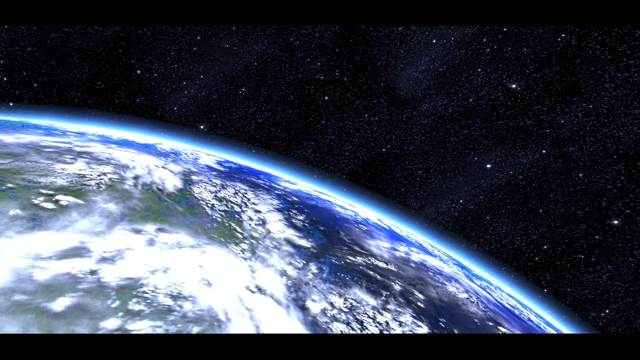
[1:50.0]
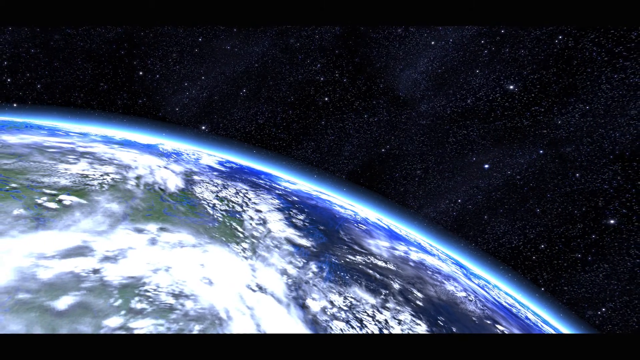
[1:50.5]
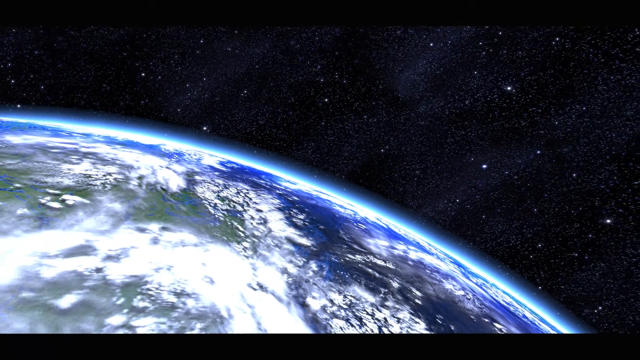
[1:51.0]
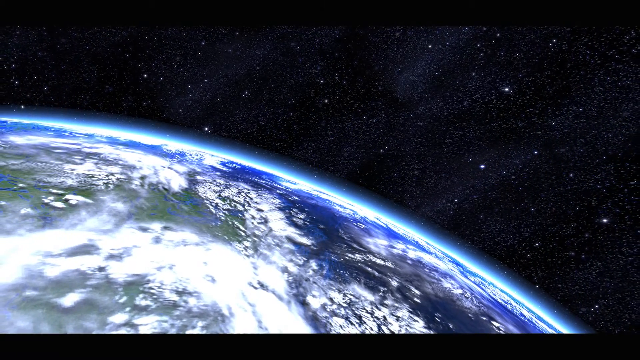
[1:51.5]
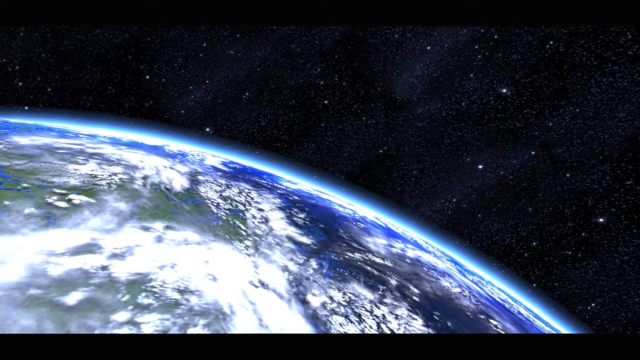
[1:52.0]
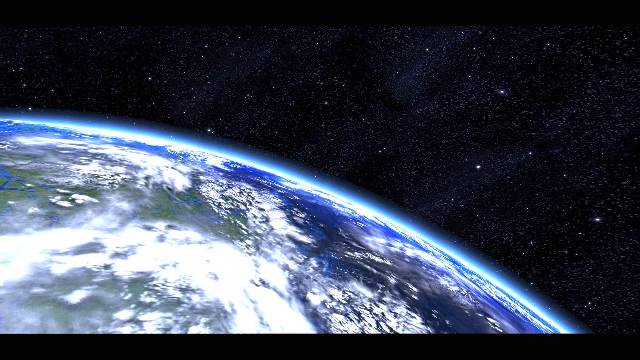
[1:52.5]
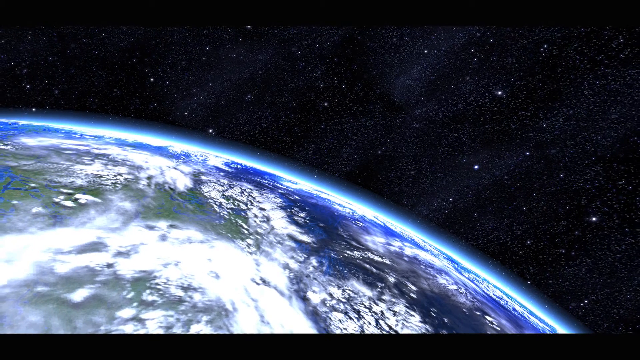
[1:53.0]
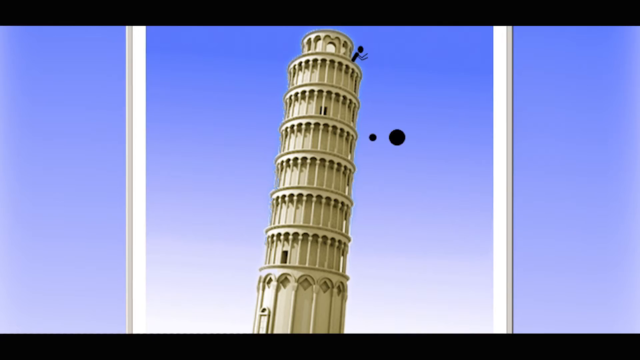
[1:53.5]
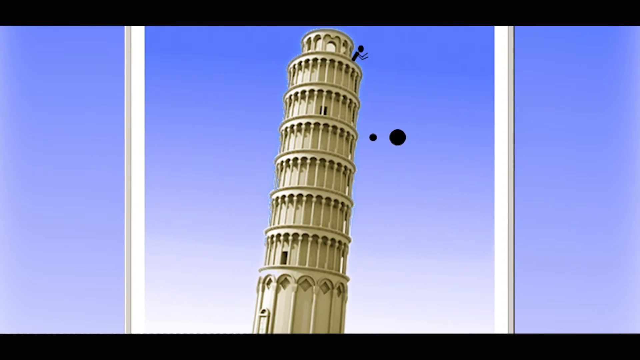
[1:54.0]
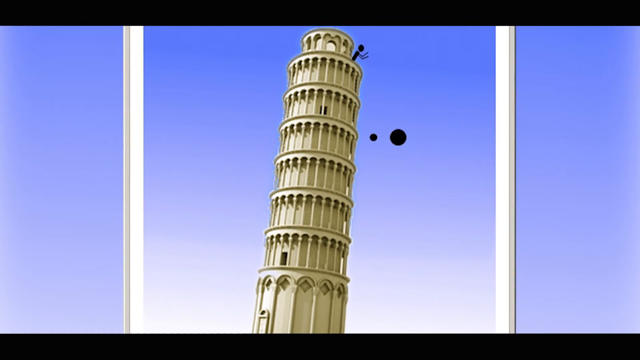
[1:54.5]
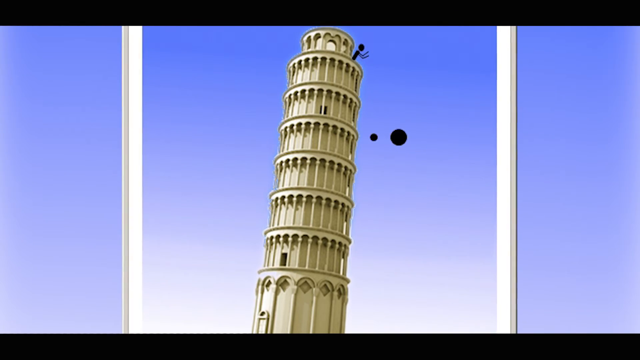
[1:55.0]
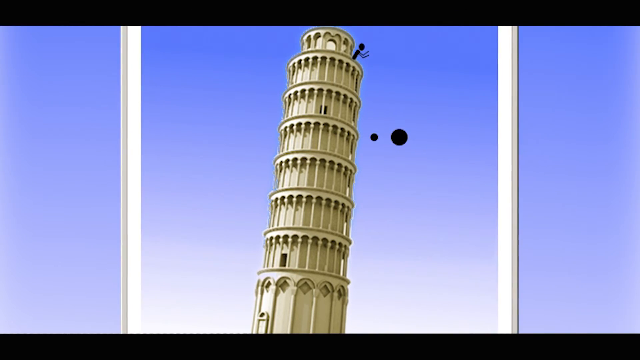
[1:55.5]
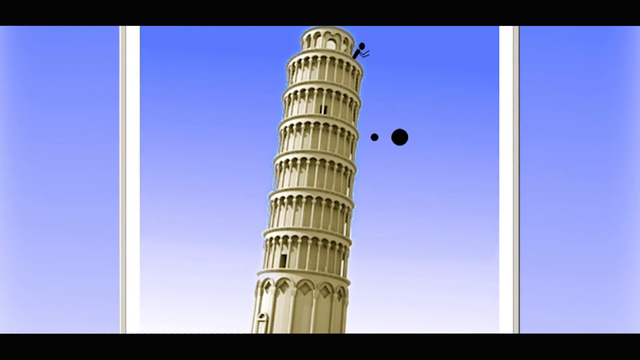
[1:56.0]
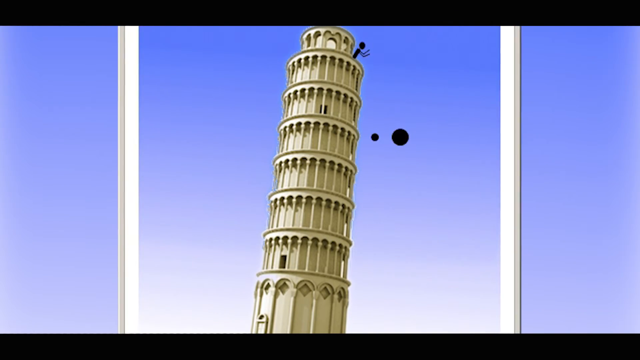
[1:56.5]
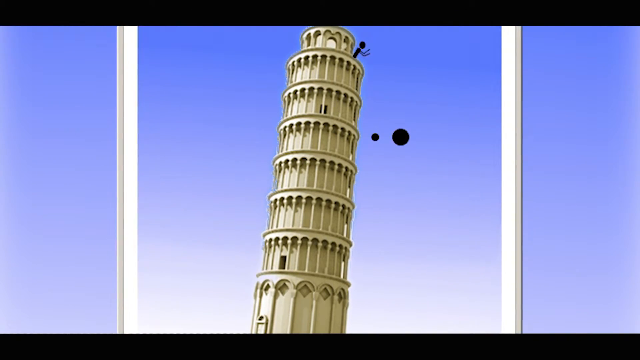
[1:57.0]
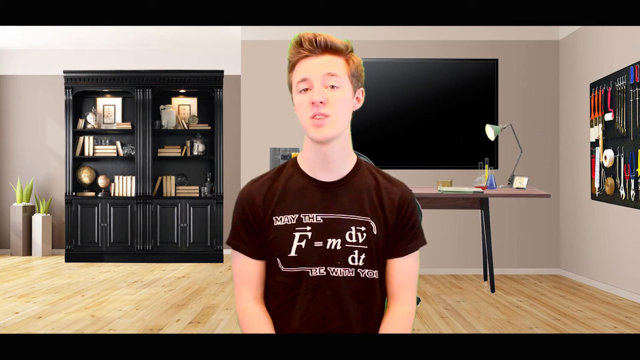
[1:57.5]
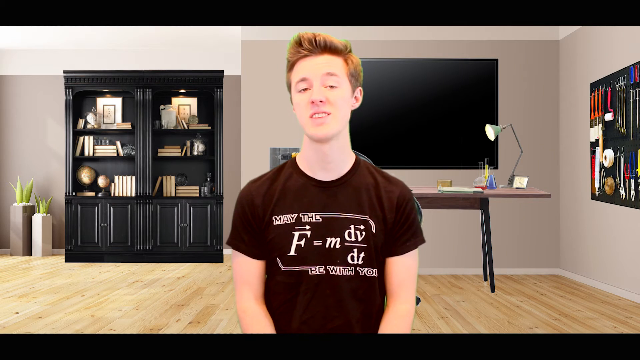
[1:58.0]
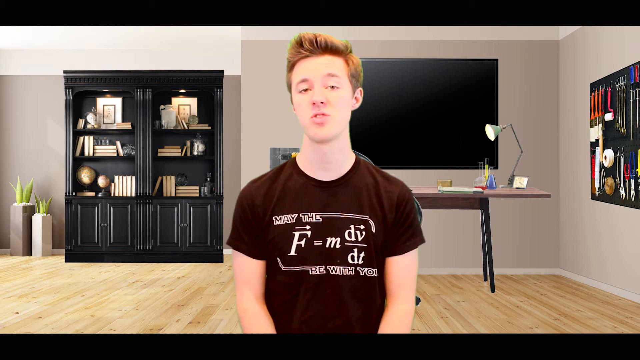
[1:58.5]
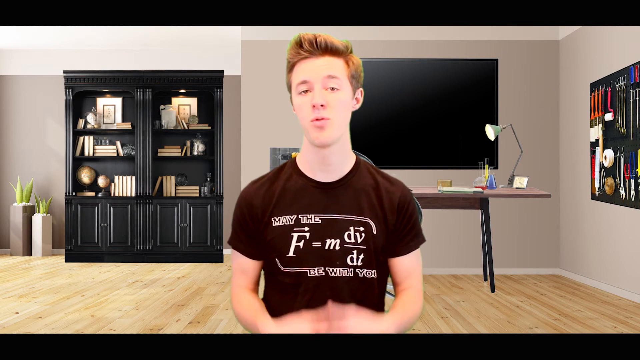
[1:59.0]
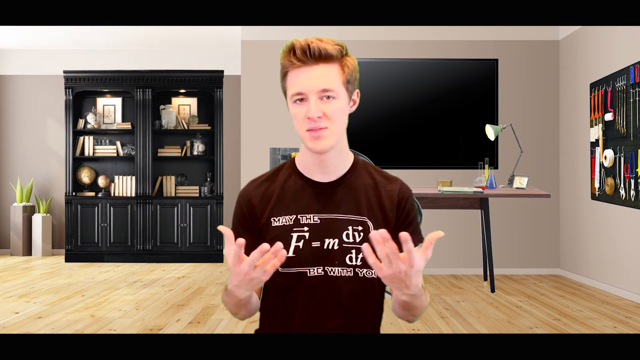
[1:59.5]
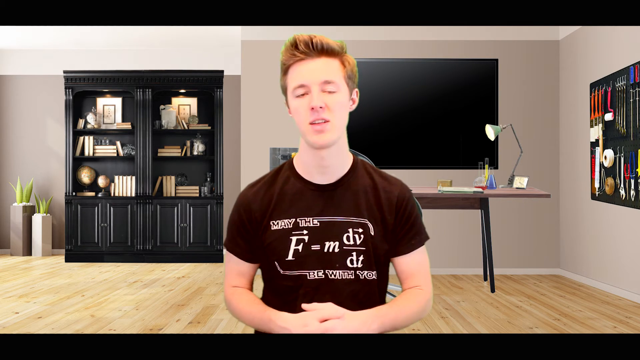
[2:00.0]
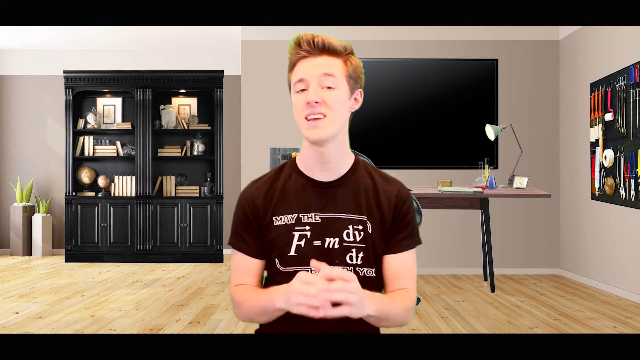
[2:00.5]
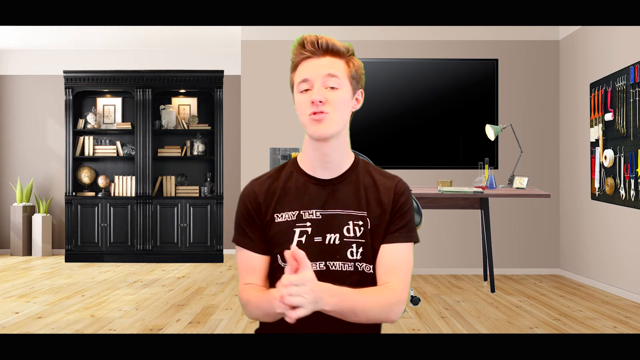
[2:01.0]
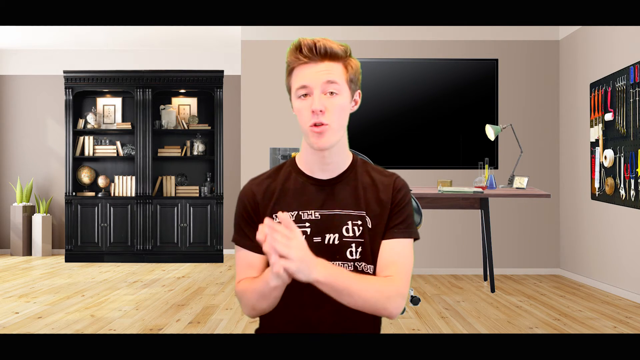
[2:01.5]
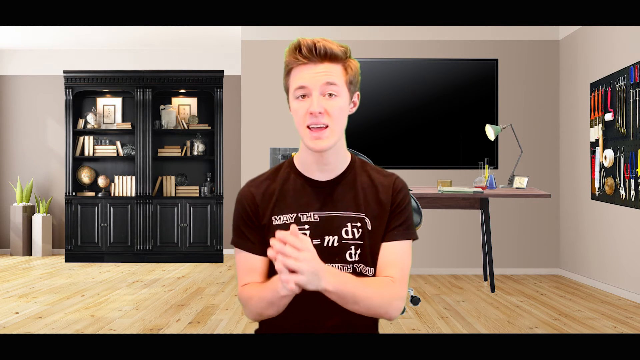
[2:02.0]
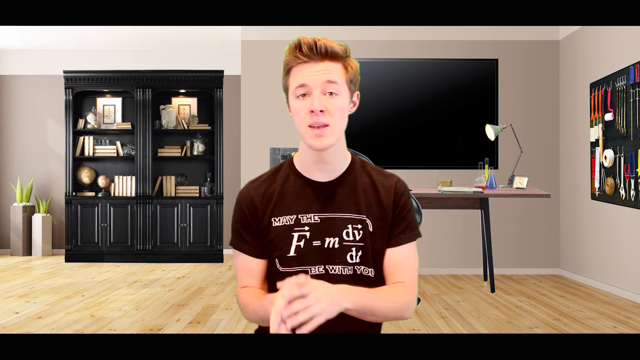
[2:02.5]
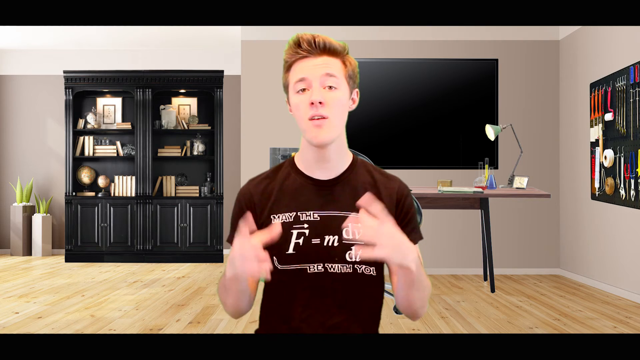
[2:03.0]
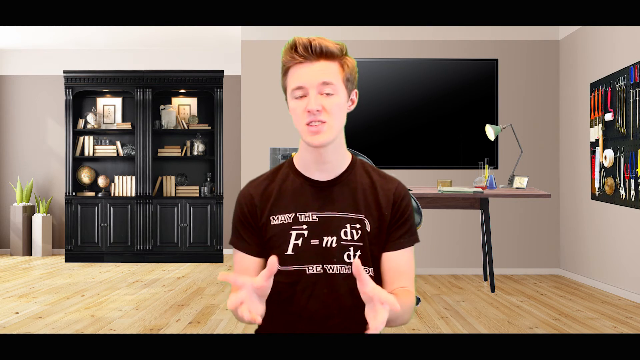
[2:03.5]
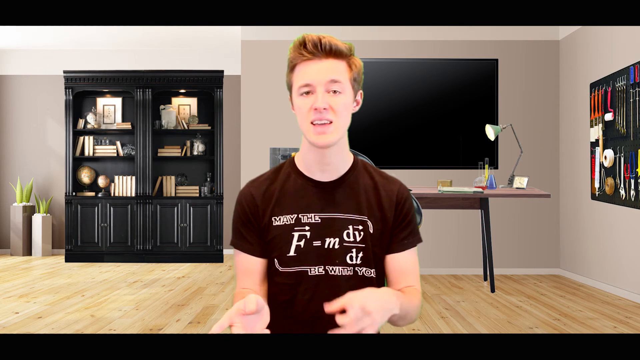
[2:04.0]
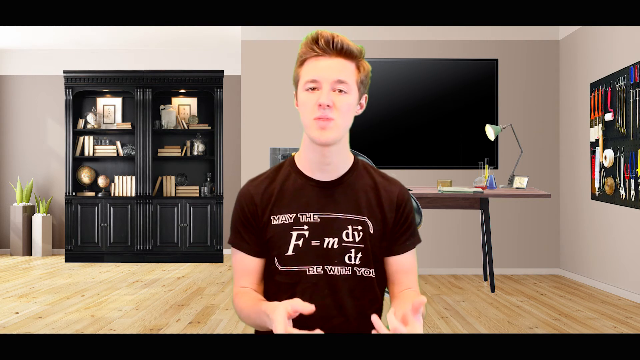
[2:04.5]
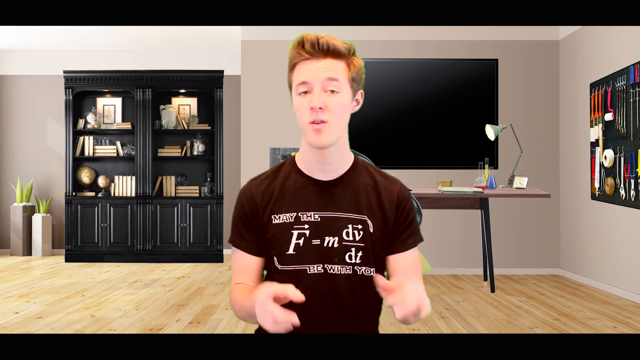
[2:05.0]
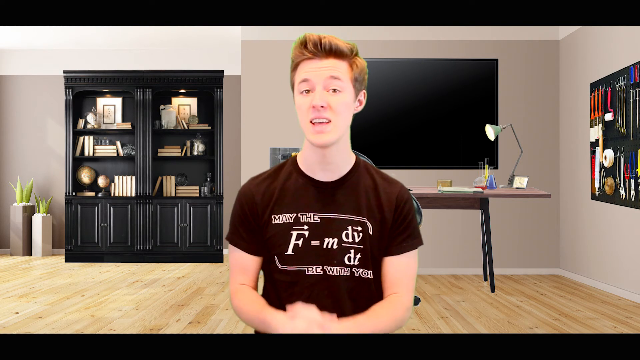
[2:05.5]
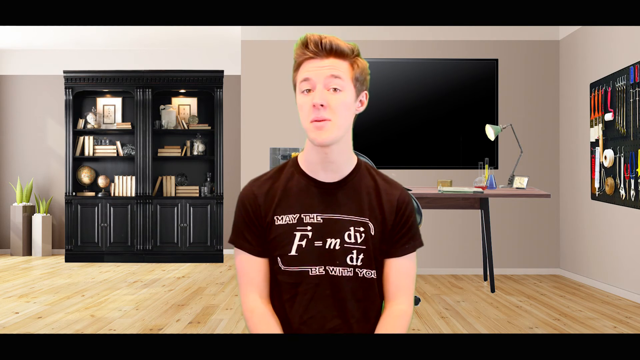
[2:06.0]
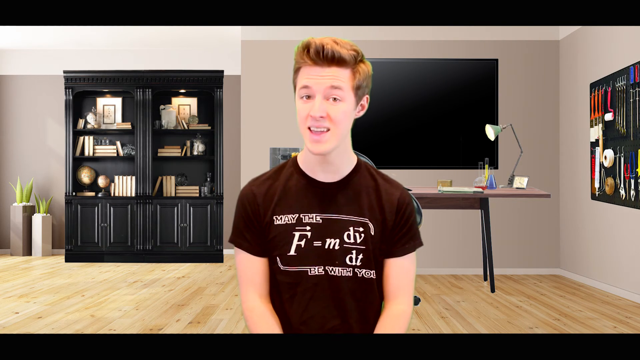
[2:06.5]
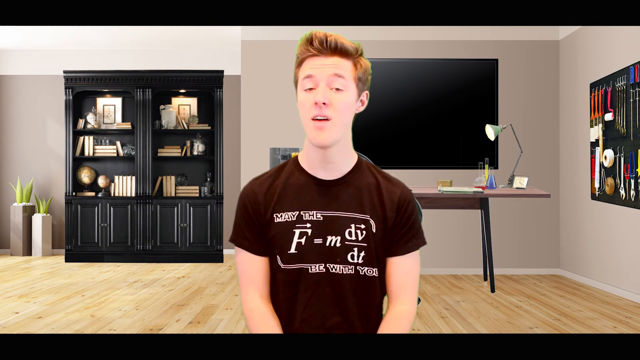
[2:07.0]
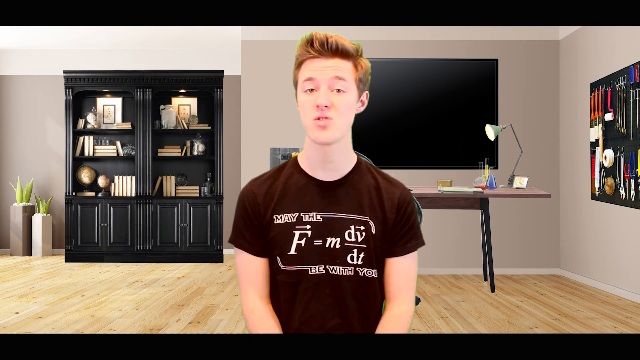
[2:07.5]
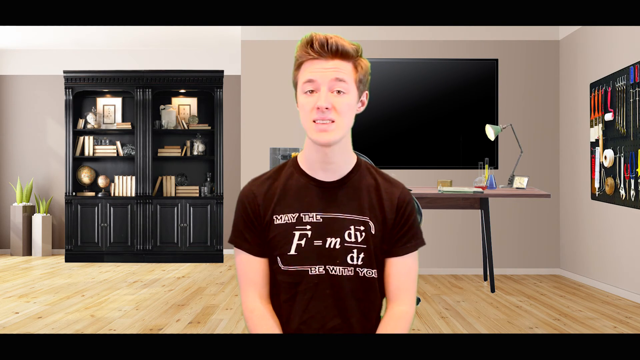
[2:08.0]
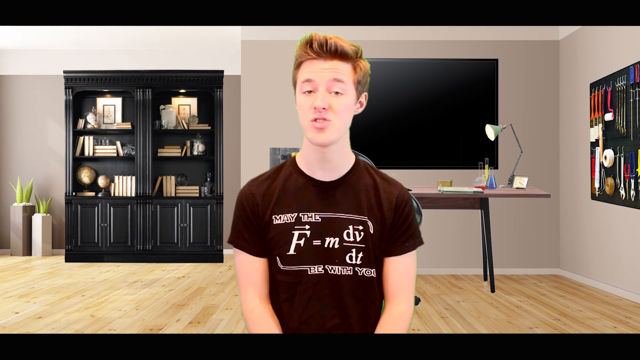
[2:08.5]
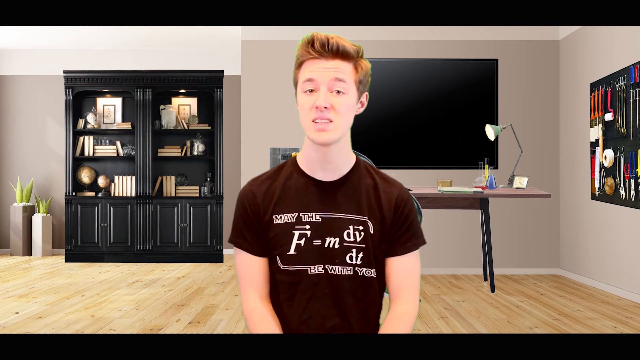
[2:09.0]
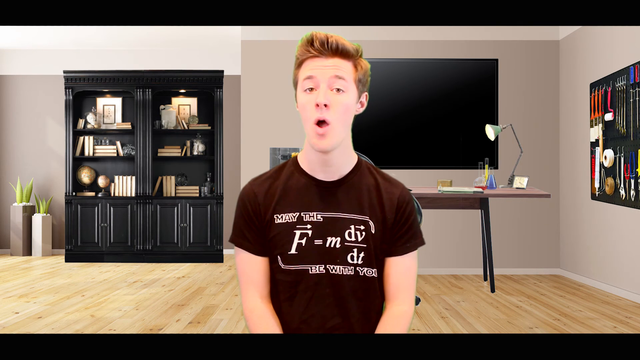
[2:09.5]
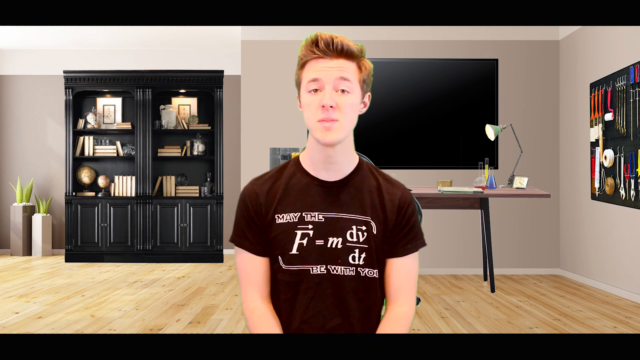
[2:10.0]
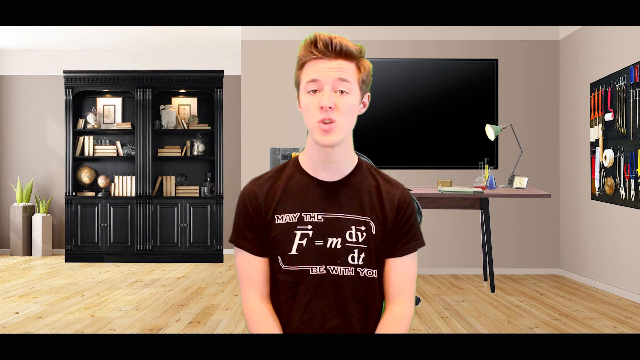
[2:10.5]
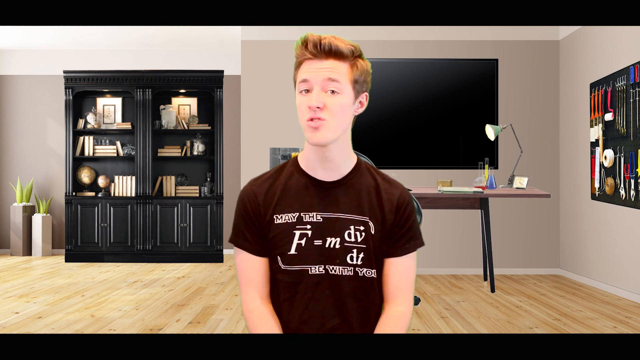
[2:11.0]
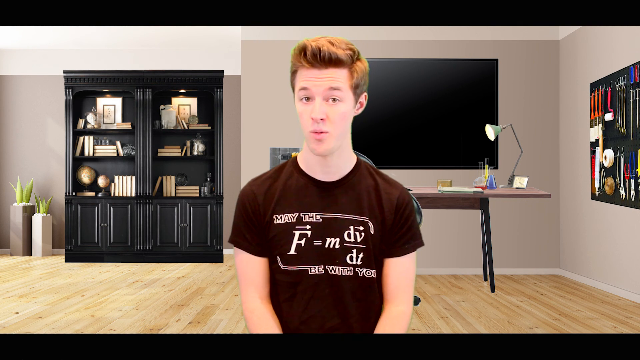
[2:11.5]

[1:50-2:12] The planet Earth is shown, with a dark sky full of tiny stars on its right side. The view zooms out and then shows a tall building with many stories, slightly tilted toward the right, with a black figure of a man on top. After that, the young teenage boy from the beginning of the video appears, apparently explaining what was shown: the paintings of the people, the apple tree and the apple falling on a man, the equations, the planet Earth, and the man in space, seemingly explaining how all of these things are connected.